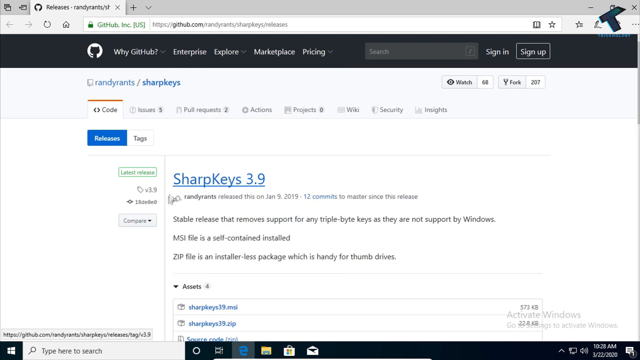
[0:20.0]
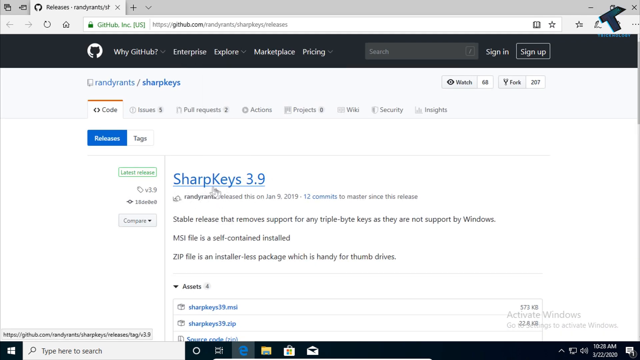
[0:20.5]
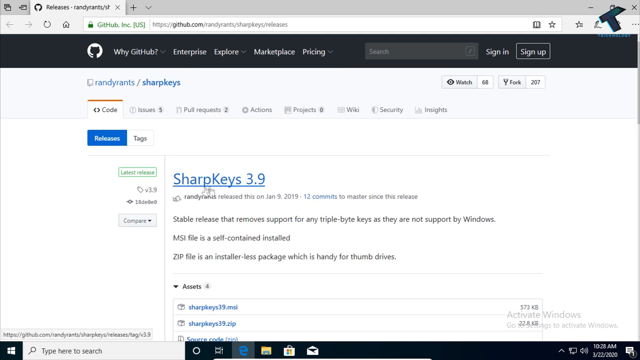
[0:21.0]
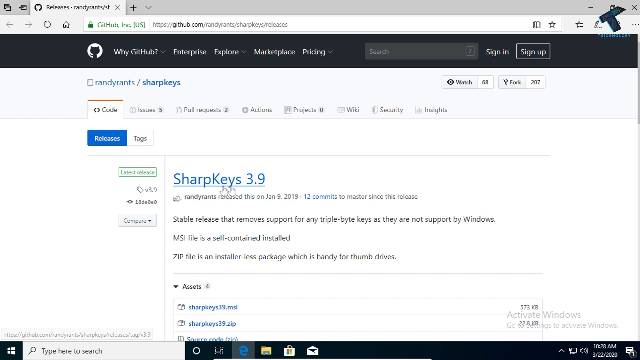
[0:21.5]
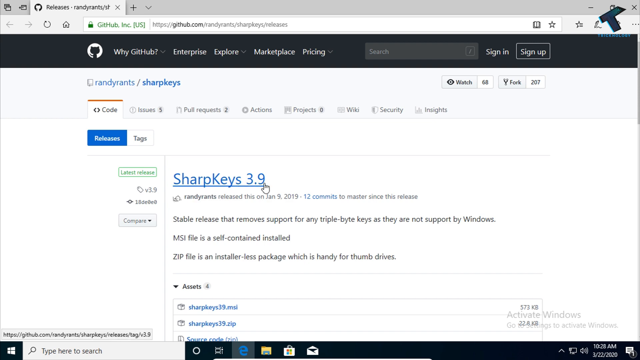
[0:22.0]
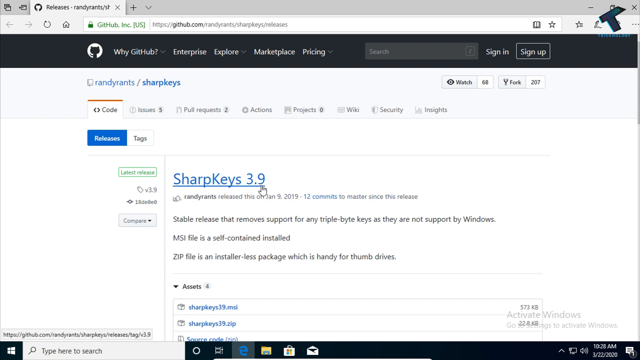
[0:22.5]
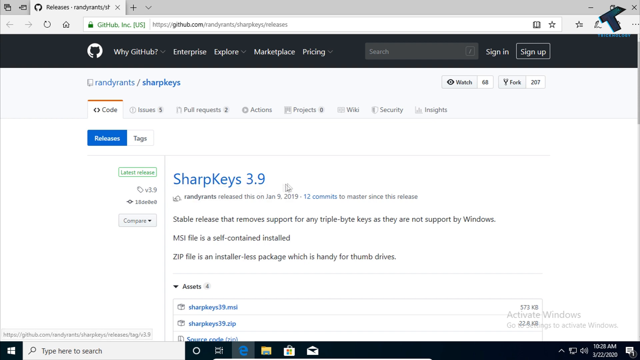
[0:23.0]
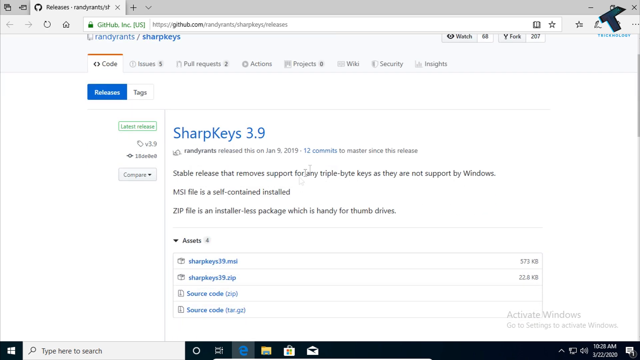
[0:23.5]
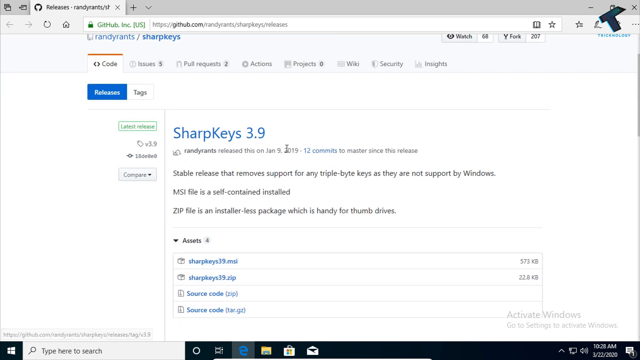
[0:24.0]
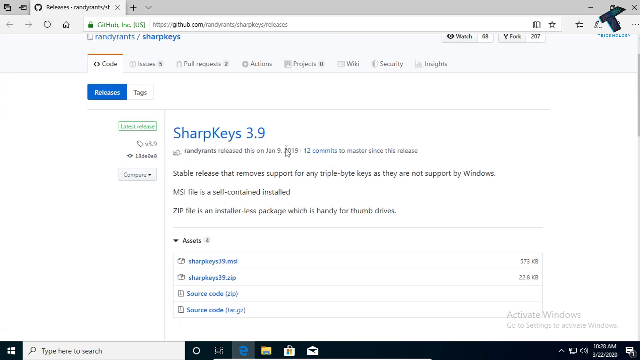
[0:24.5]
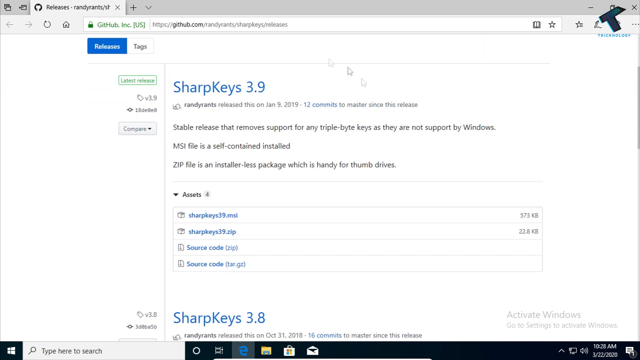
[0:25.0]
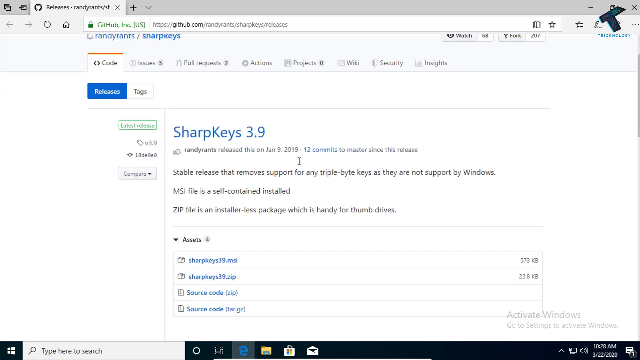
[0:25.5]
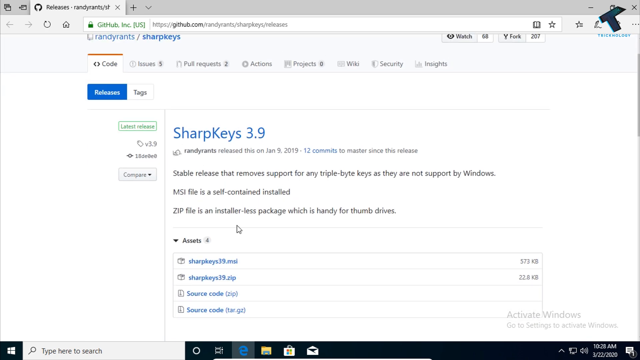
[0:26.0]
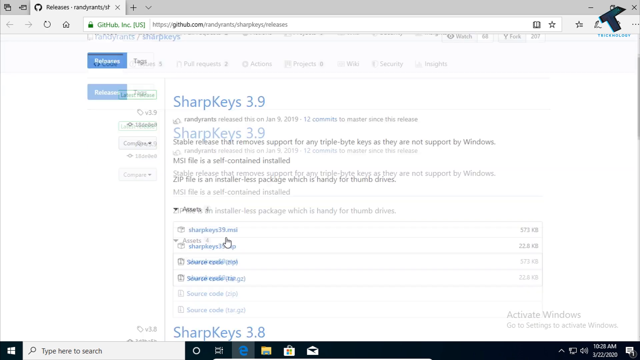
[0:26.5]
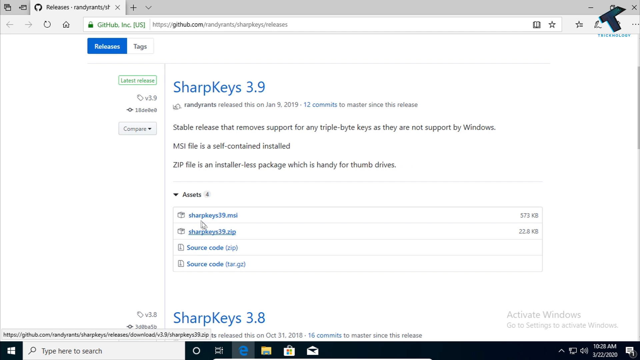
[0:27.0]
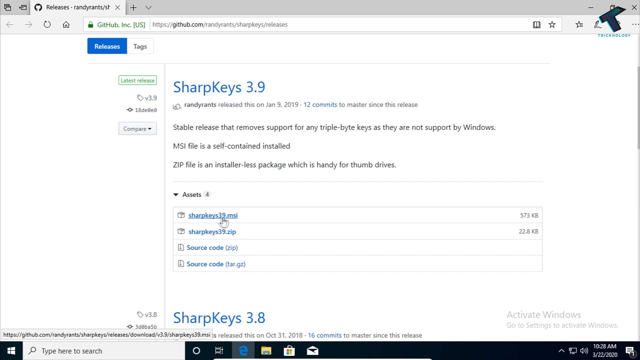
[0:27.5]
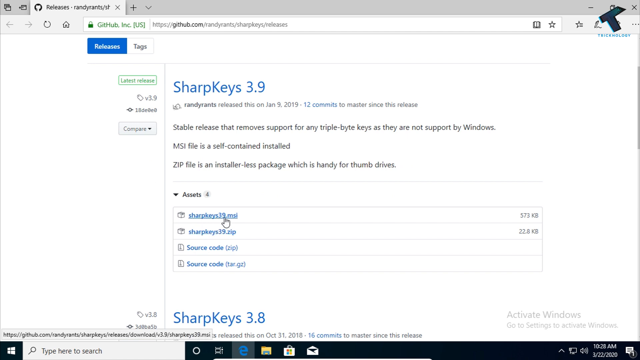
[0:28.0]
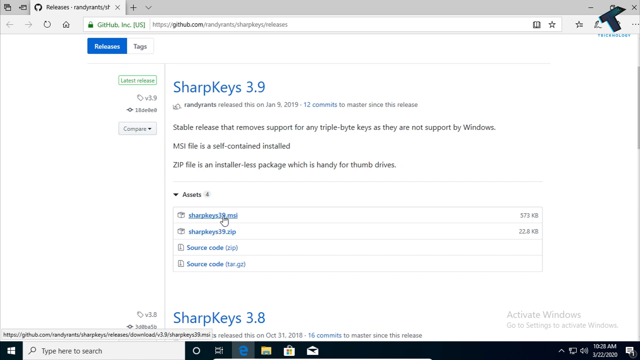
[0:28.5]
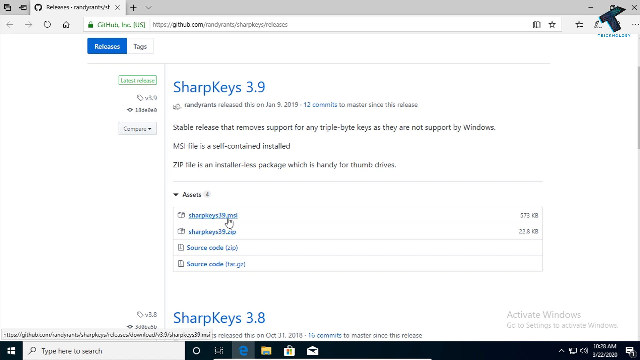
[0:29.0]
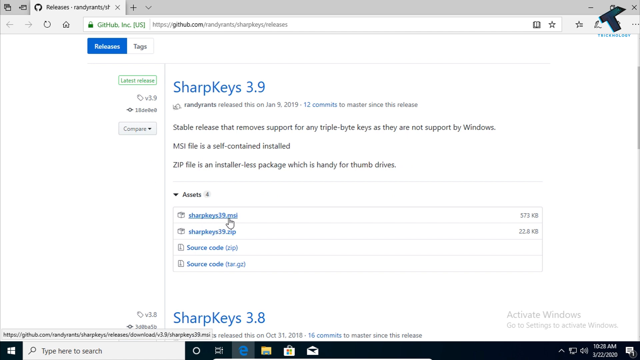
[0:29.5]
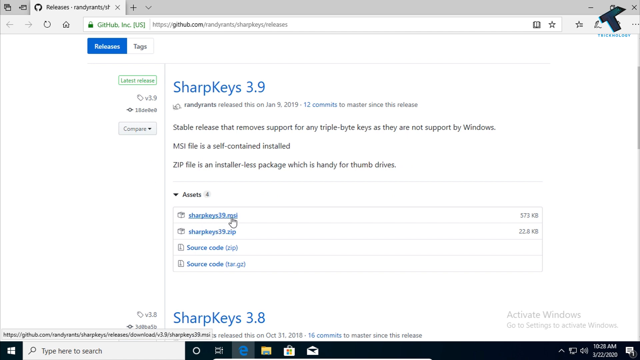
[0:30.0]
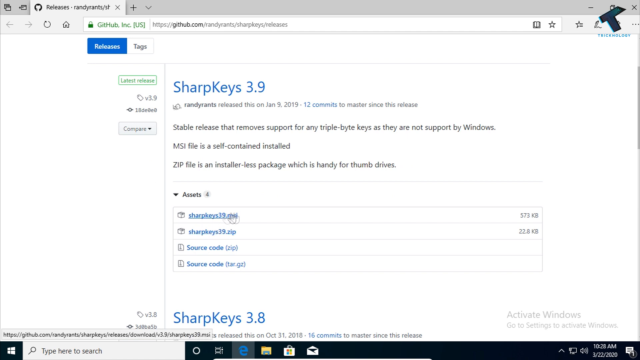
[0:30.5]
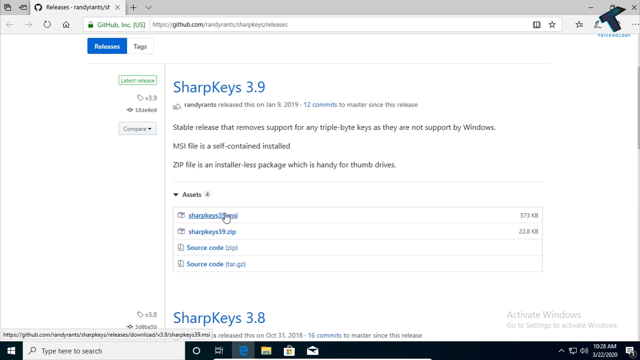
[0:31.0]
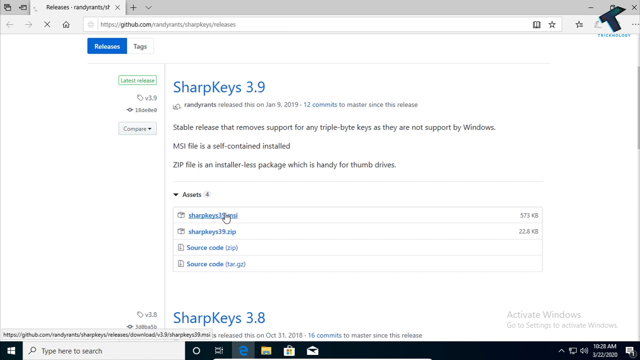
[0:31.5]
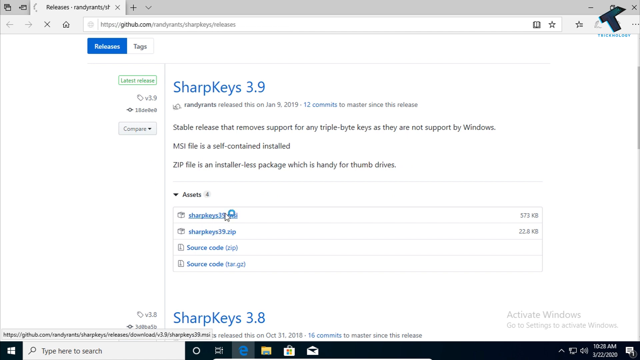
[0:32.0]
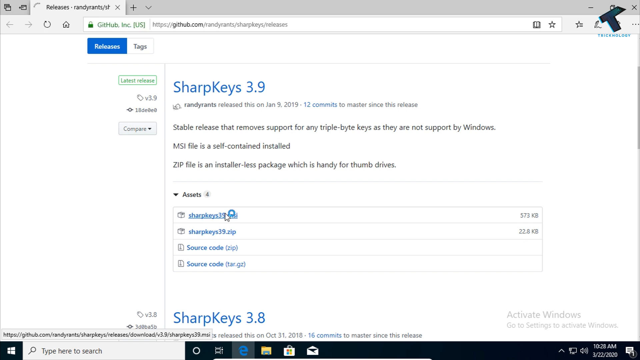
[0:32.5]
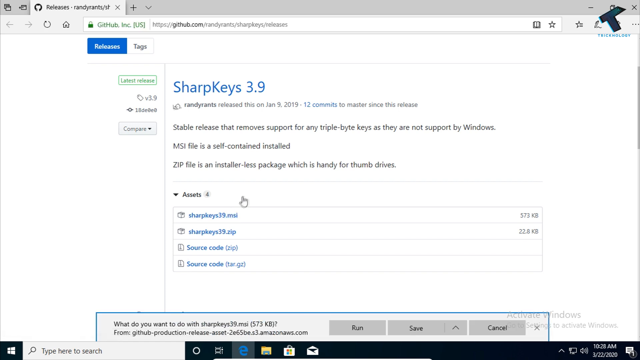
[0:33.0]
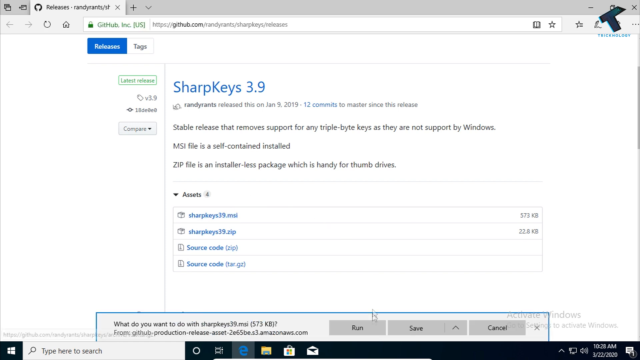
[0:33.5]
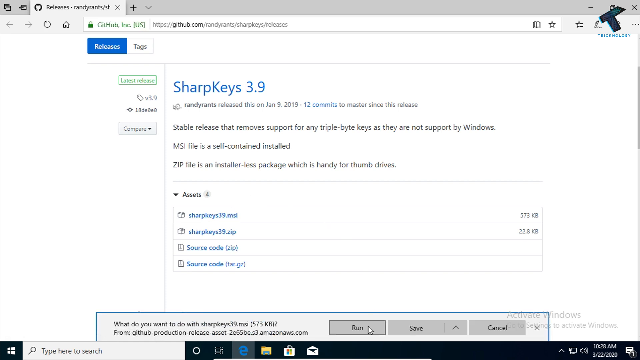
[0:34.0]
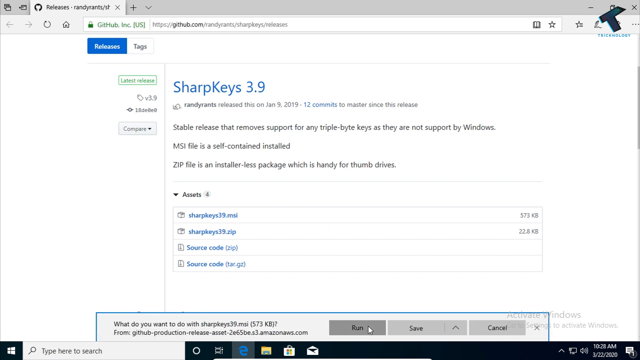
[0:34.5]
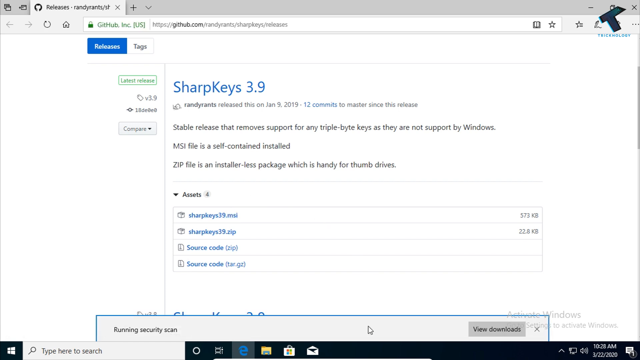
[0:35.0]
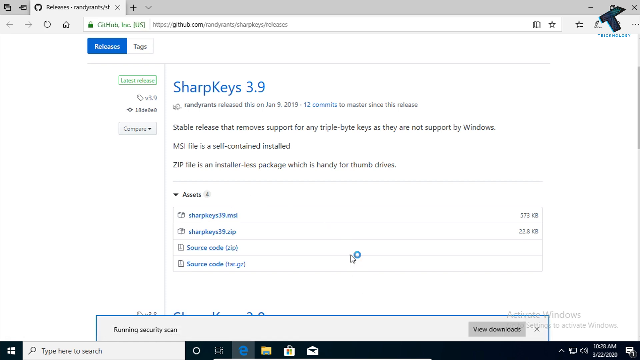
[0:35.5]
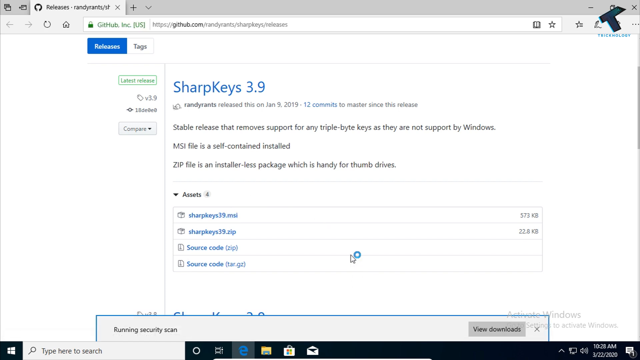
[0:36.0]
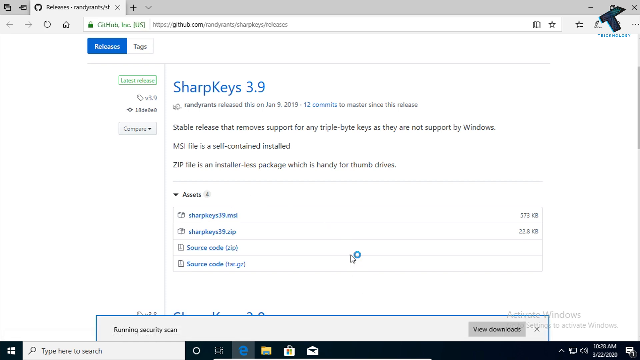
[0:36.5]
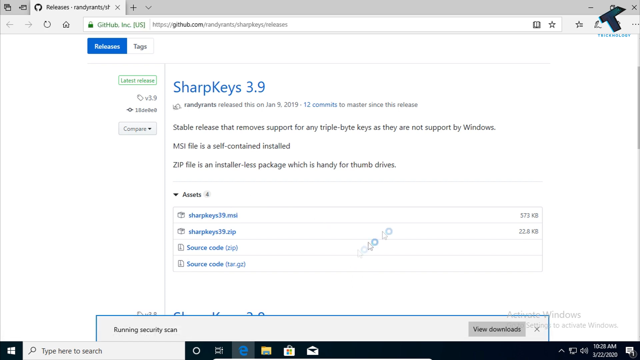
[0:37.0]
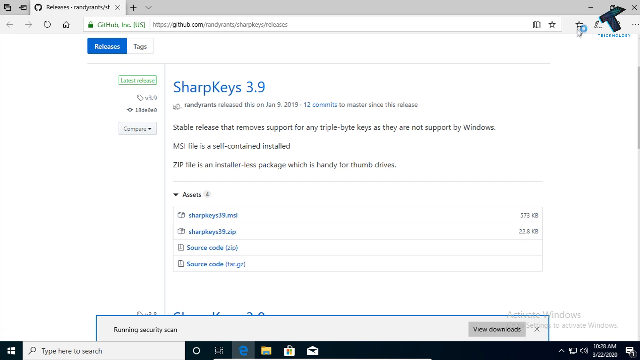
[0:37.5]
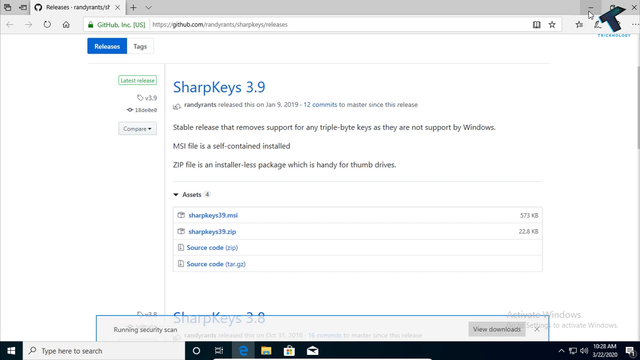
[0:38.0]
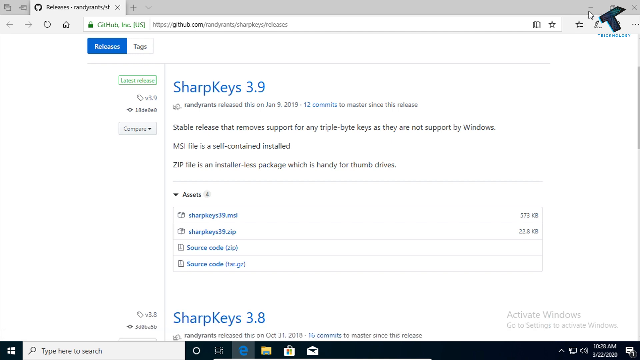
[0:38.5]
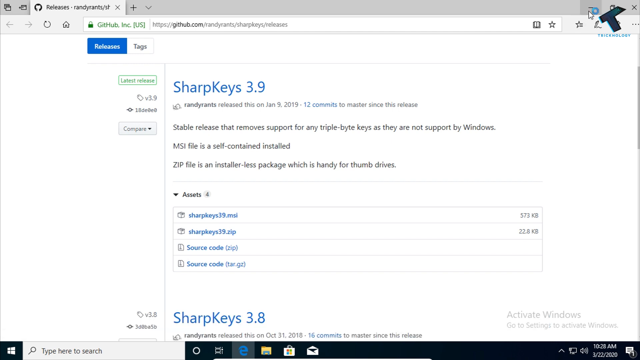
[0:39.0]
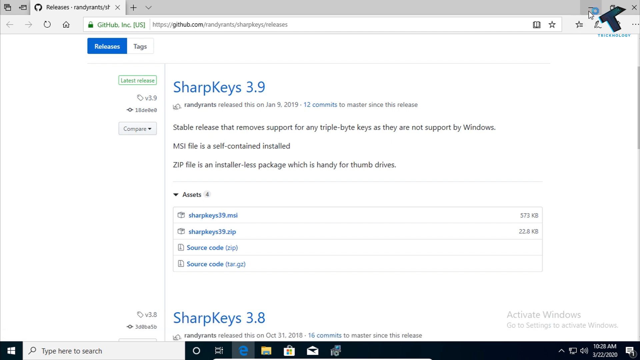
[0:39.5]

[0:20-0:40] The GitHub site remains on screen. A menu at the top, on a black border in red and white, apparently lists "Why GitHub", "Enterprise", "Explore", "Marketplace" and "Pricing". A section reads "SharpKeys 3.9" with an explanation: "Stable release that removes support for any triple byte keys that are not supported by Windows. MSI file is a self-contained installed. Zip file is an installerless package, which is handy for thumb drives." The cursor seems to move around, highlighting SharpKeys without quite selecting it. The page scrolls down, and under "Assets" there appear to be different versions of SharpKeys: apparently a SharpKeys MSI, a SharpKeys Zip, a link for the source code and another link for the source code. The cursor hovers over the SharpKeys MSI but doesn't seem to do anything with it.